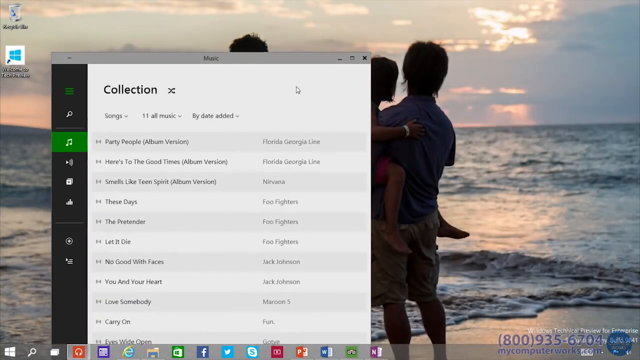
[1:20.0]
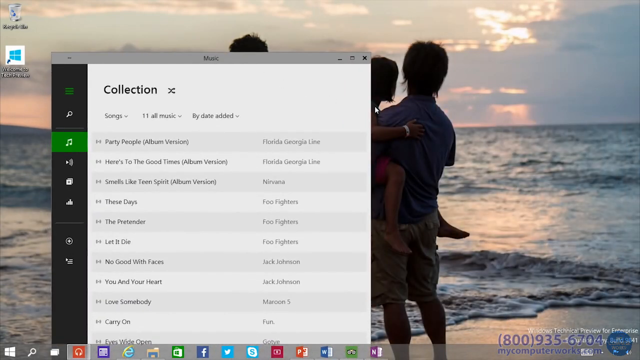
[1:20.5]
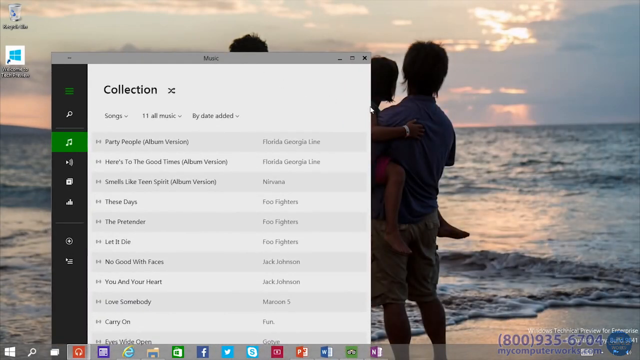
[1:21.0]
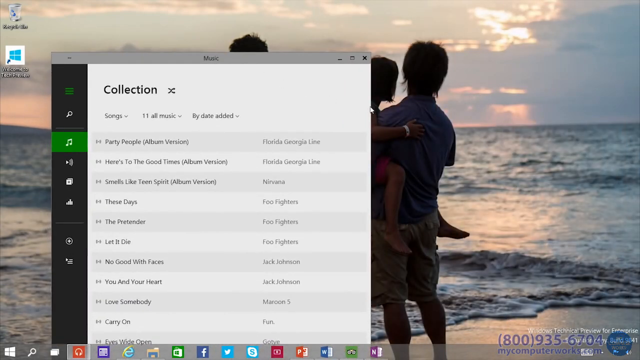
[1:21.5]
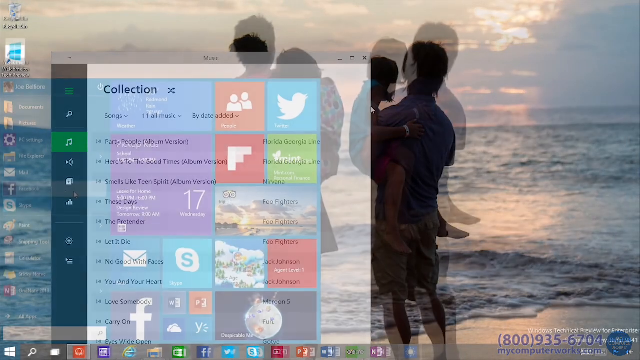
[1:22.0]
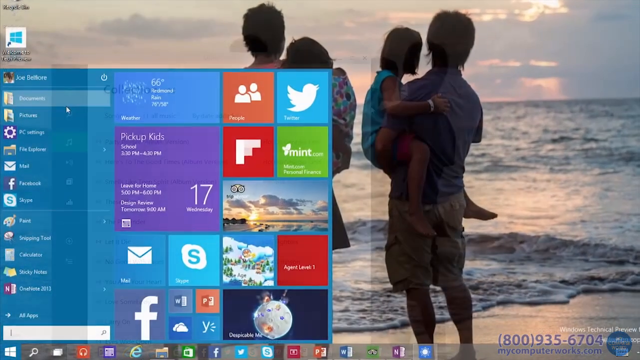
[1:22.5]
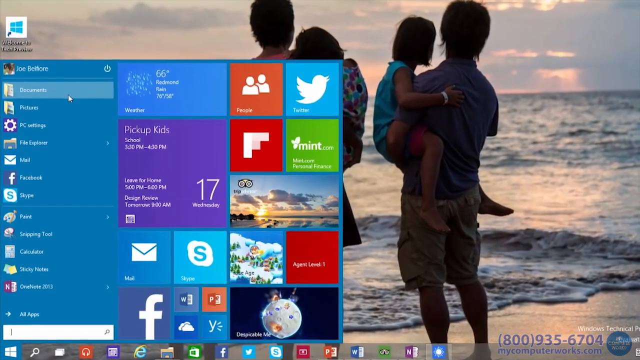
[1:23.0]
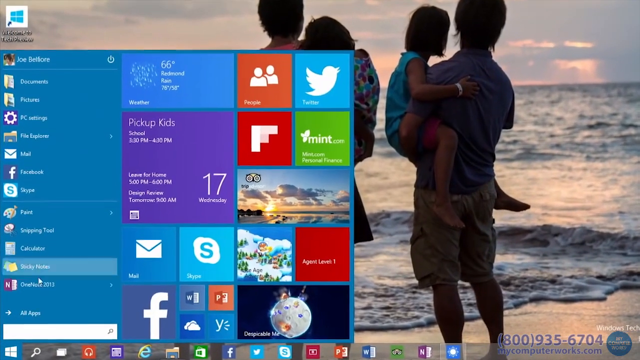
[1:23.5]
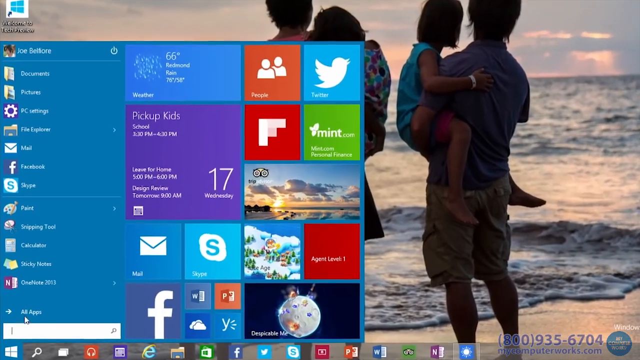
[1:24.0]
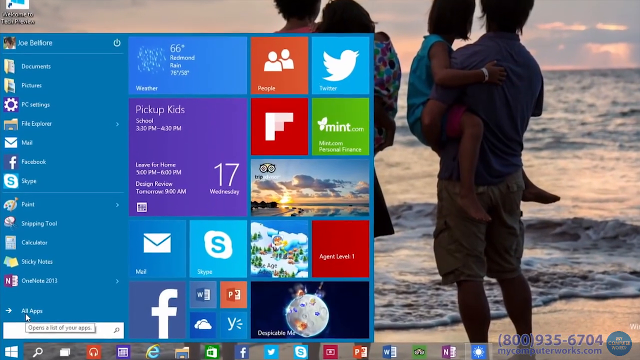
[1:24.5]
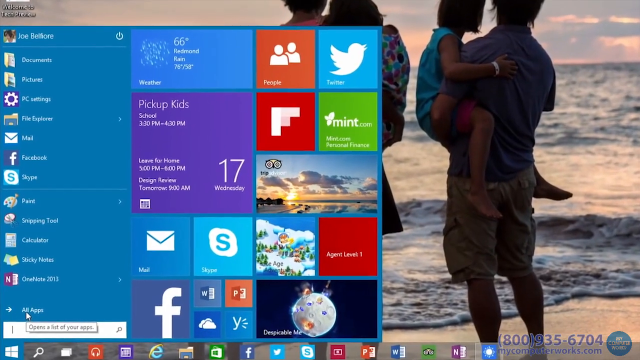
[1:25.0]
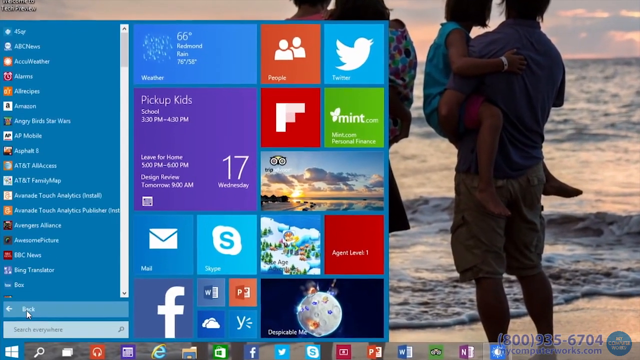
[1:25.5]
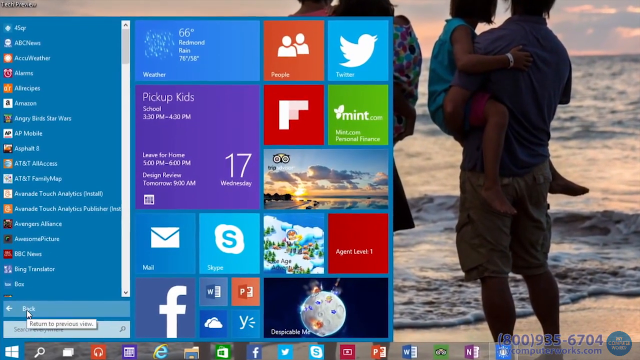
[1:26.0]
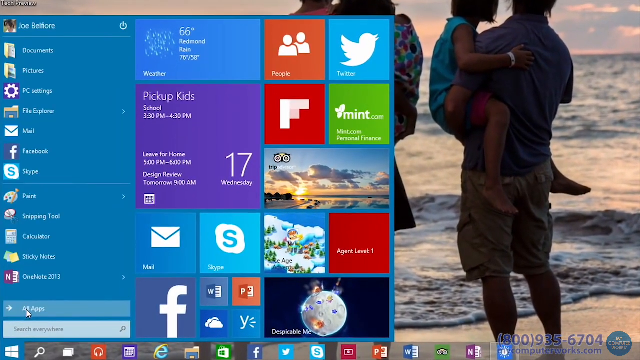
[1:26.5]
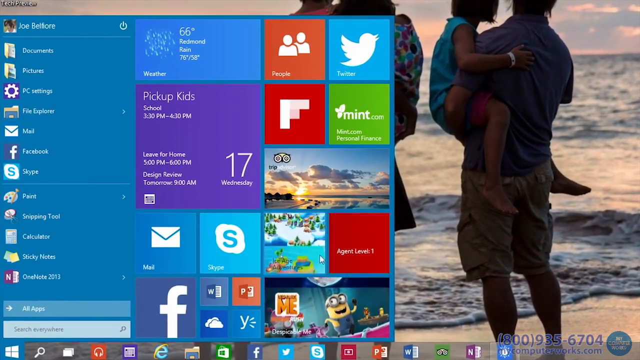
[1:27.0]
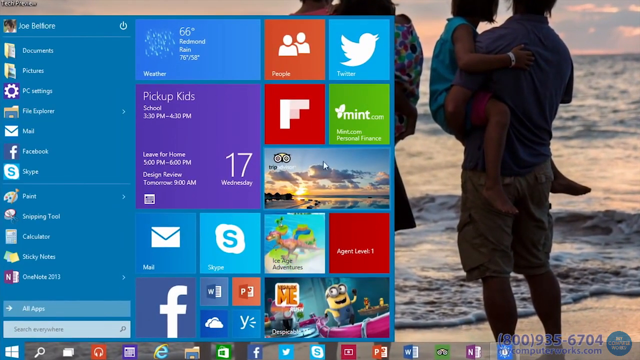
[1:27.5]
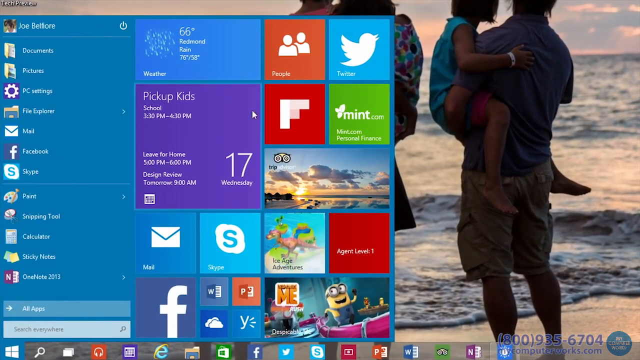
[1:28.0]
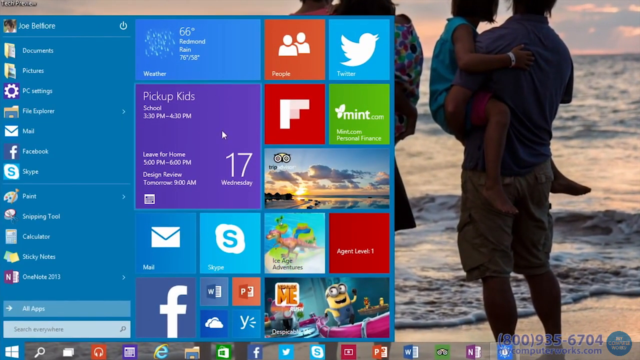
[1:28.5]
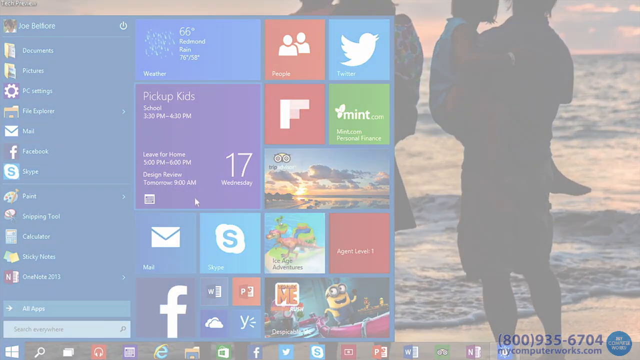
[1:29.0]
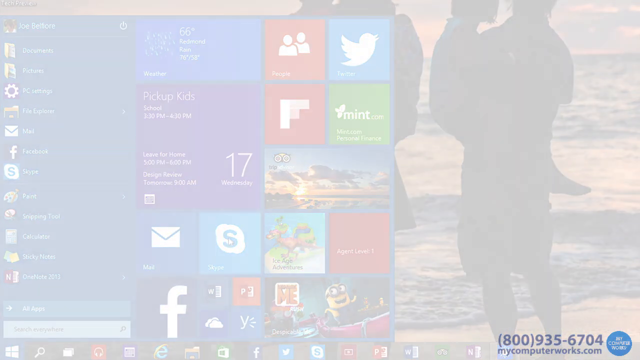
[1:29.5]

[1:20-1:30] A computer desktop shows a background photograph, taken from behind, of a family silhouetted by the sun as they look out to sea. In the top left corner are two icons, Recycle Me with the bin and a blue Windows logo underneath it. An Xbox Music panel is open on the left of the screen, but it fades out, and the shot cuts to the desktop zooming in to the left on the Windows controls opened up from the bottom left-hand corner. A tile grid with lots of colourful tiles is on the right, and a vertical blue column with individual program listings is on the left. The cursor moves down to the bottom listing, "All Apps", which has an arrow next to it, and clicks to open it; the list of options above changes, and the cursor then clicks back to return to the original listings. The arrow moves over one of the largest tiles on the right, a purple one with "Pick Up Kids School 3.30pm to 4.30pm" and "17 Wednesday" written inside it. The screen fades to white.